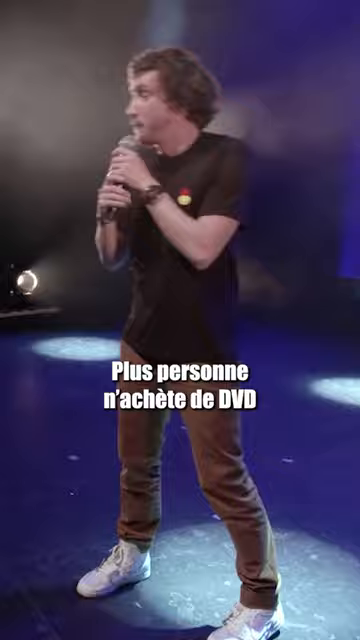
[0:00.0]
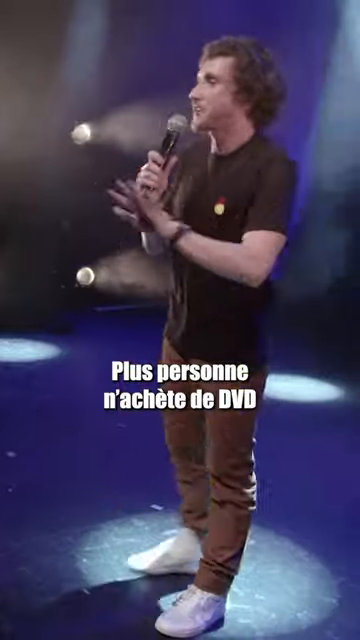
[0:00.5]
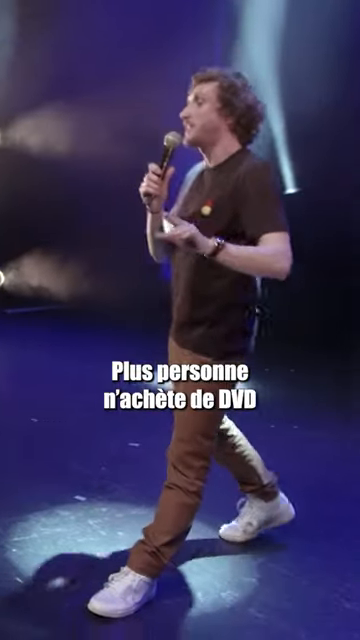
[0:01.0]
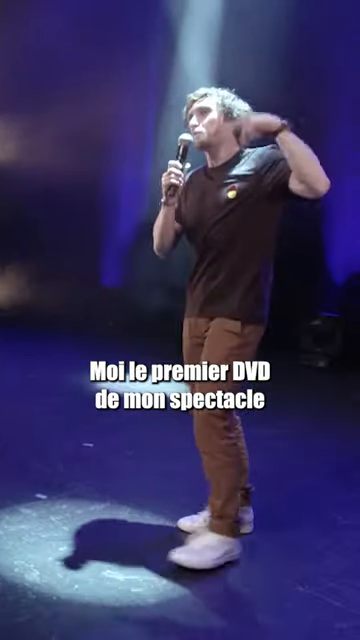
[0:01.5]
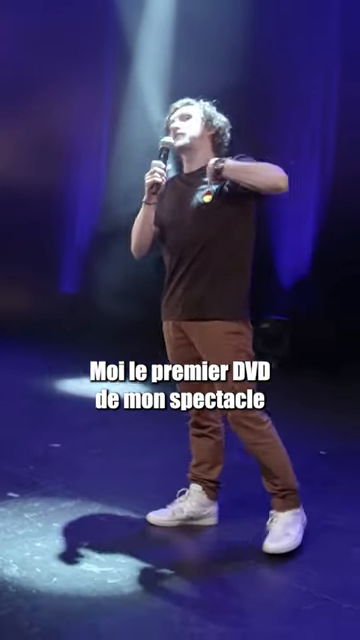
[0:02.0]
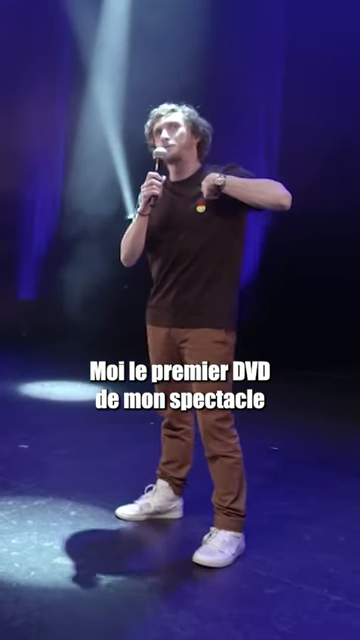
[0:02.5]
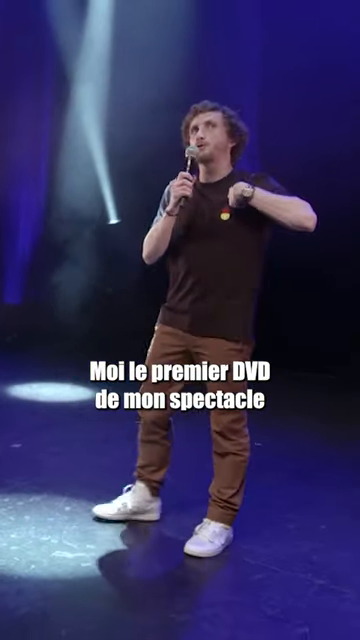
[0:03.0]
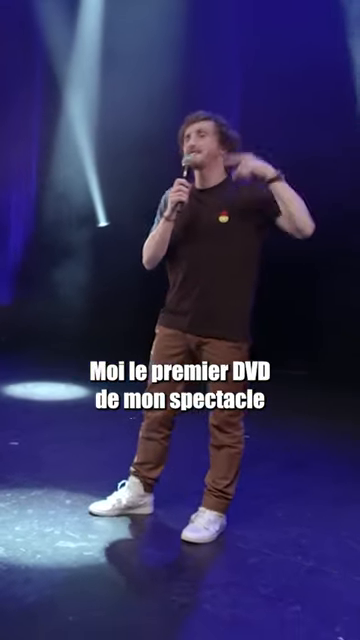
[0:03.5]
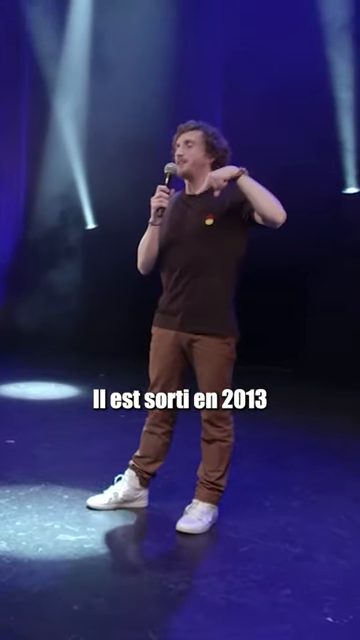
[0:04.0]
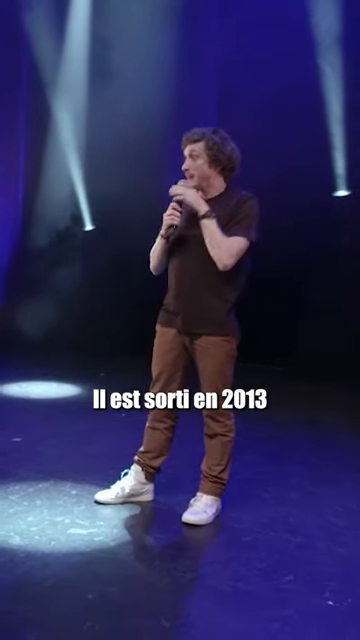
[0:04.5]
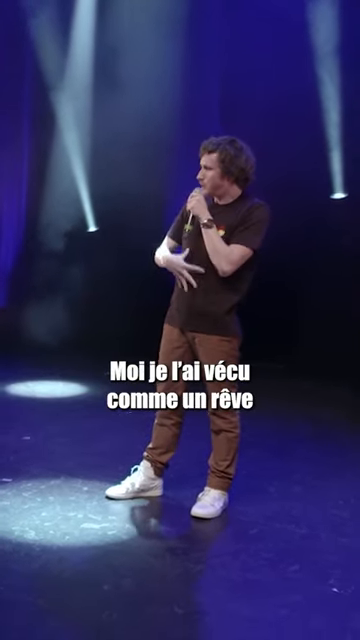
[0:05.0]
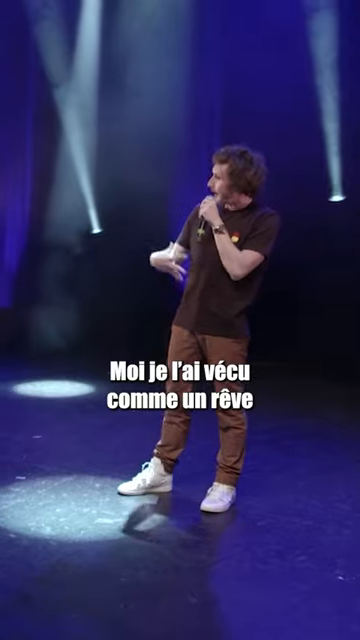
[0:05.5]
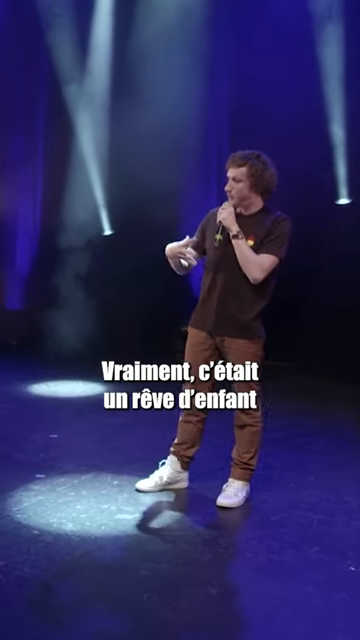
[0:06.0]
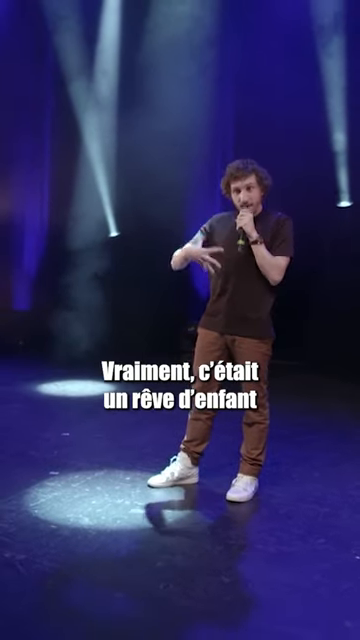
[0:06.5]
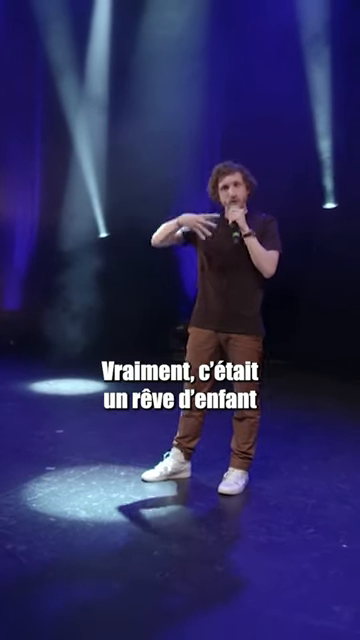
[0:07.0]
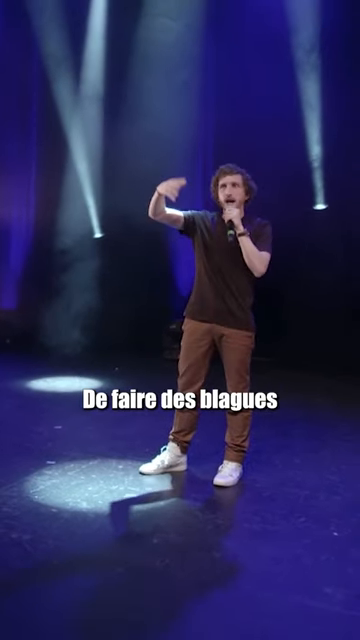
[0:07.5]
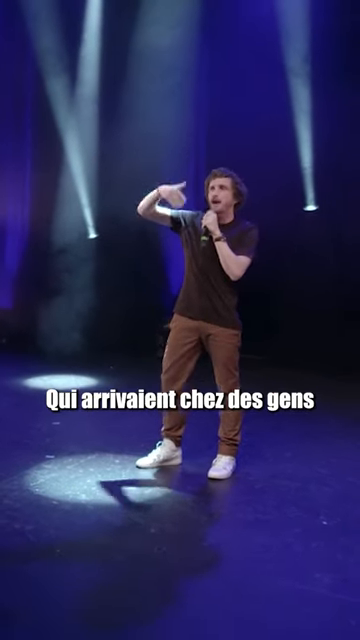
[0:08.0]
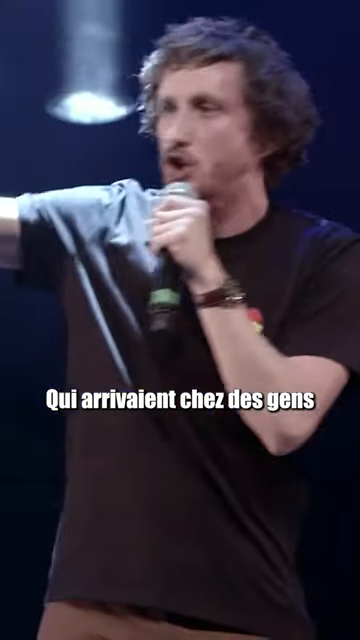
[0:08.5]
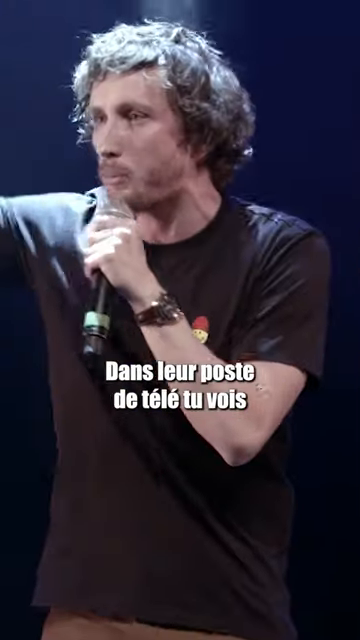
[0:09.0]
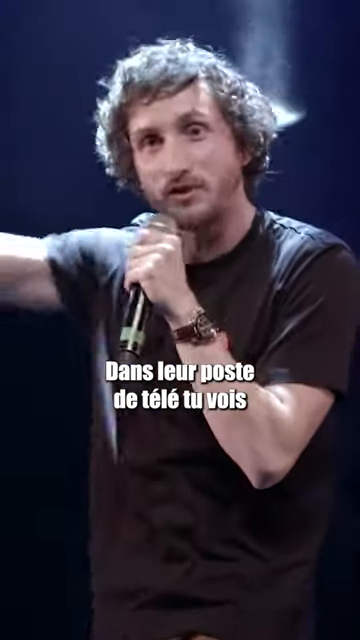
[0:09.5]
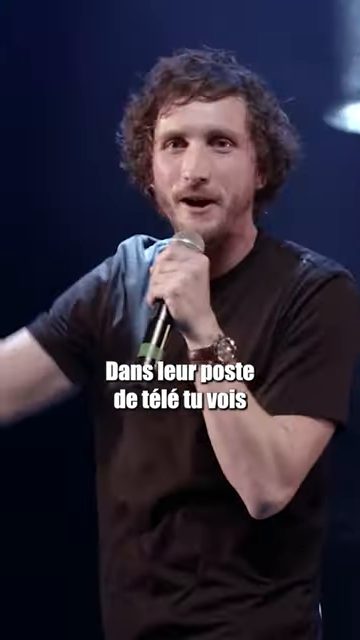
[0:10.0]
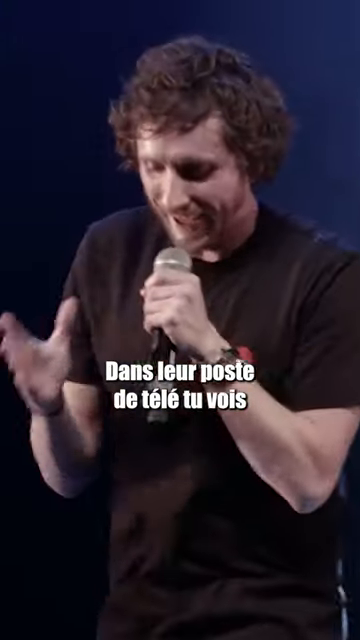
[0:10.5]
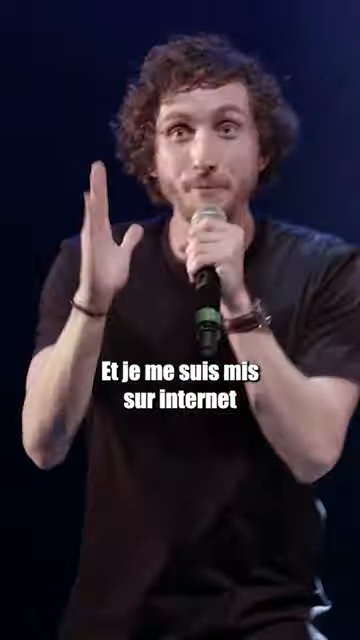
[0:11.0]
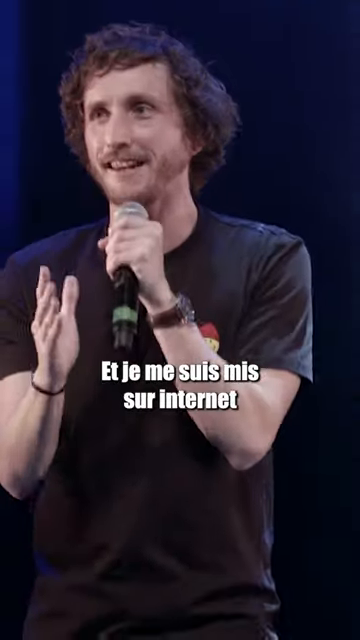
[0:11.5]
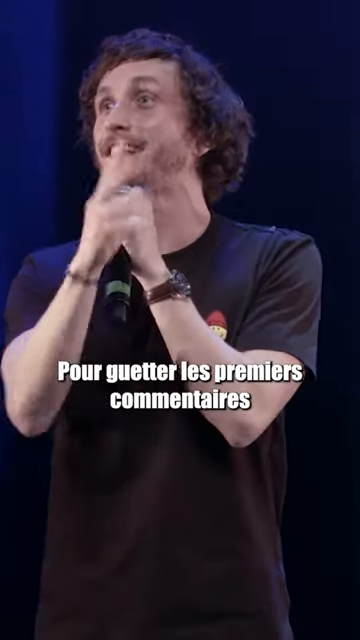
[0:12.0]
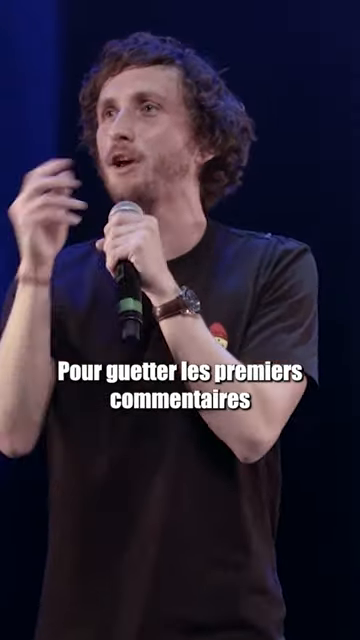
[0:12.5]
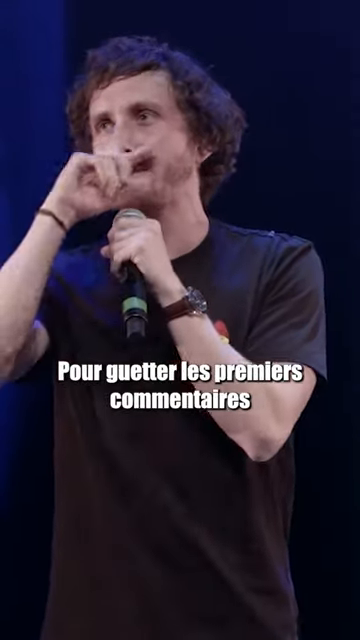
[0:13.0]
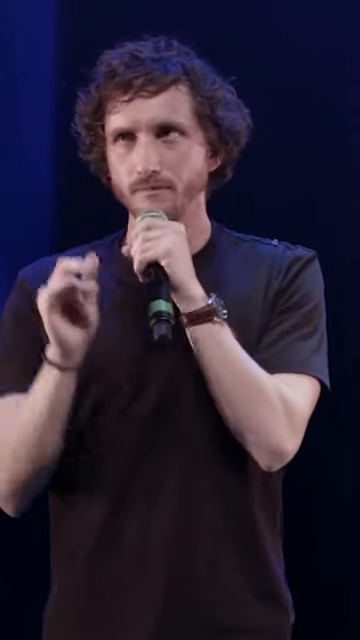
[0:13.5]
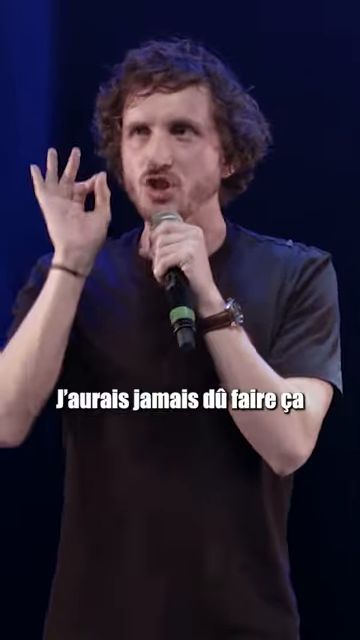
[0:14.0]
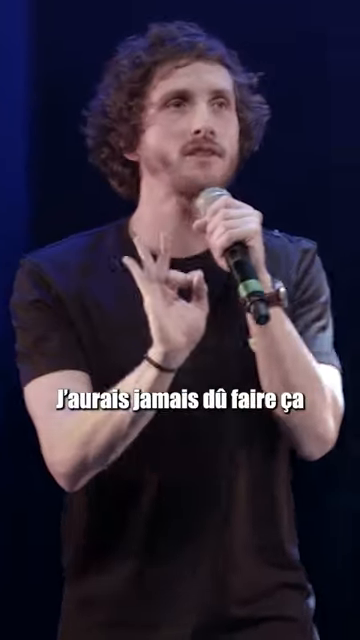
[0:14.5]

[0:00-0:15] The video opens with what is roughly a full-body shot of a man on a stage. The stage looks like it has been painted blue and black, and the backdrop looks somewhat like draped curtains, also painted blue and black, with some lighting behind it. The man holds a microphone and appears to wear a brown short-sleeve shirt, lighter brown pants and white sneakers. His hair is a little wavy and comes down a little past his ears. He wears a watch on his left hand and gestures a lot, quite big, as he talks. The shot moves closer to his face: he is a white man with darker hair and some stubble, round cheeks and a somewhat narrow chin, and his hair somewhat falls over the front of his forehead.